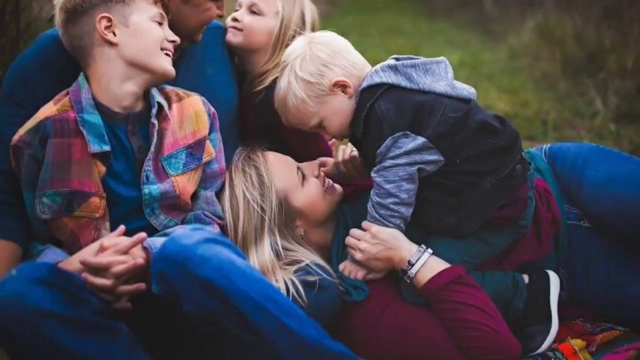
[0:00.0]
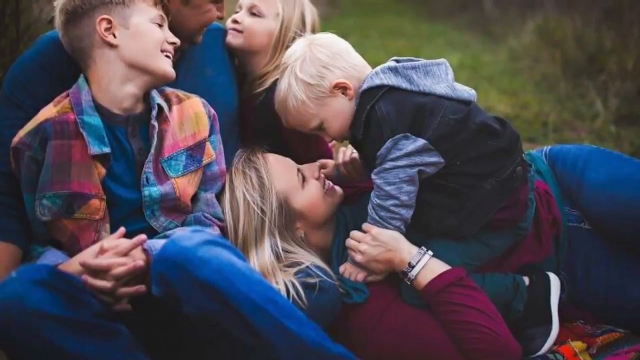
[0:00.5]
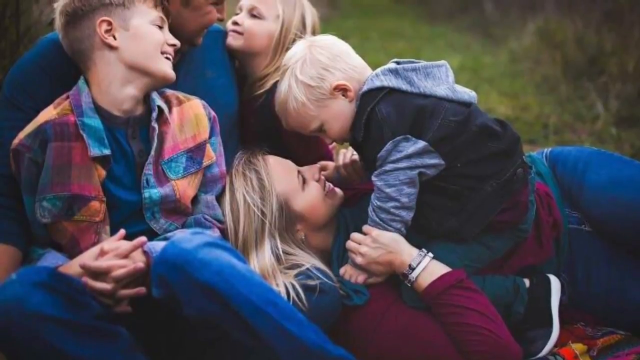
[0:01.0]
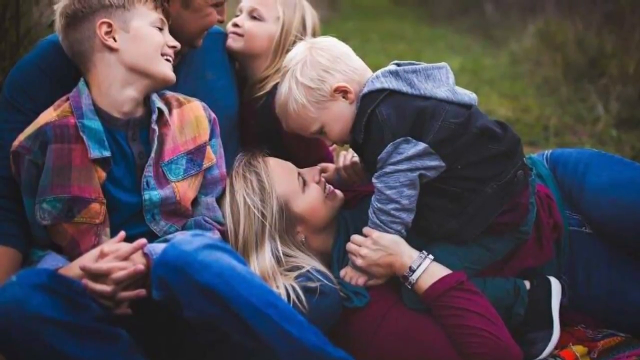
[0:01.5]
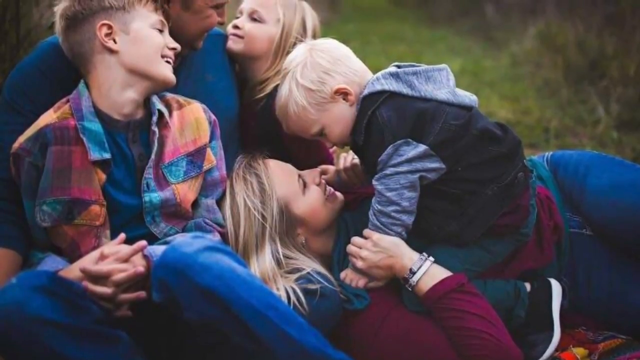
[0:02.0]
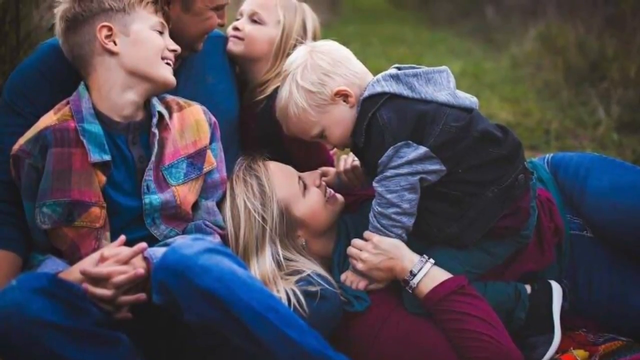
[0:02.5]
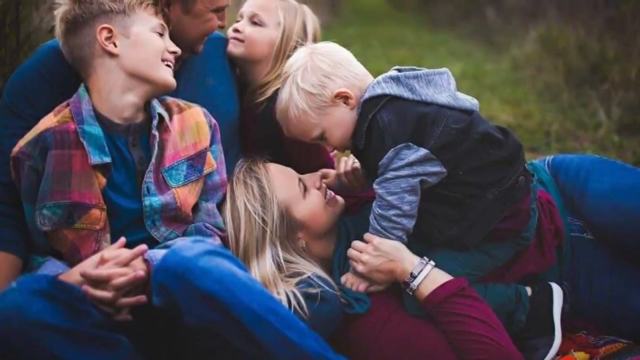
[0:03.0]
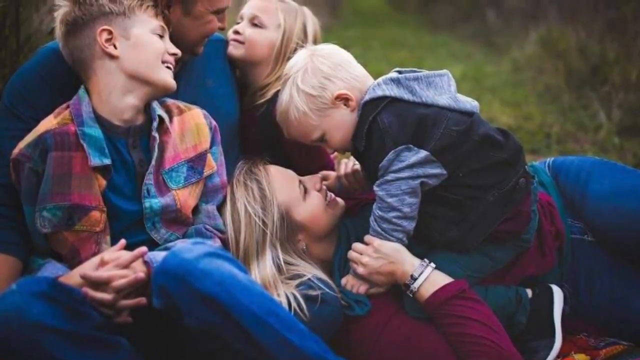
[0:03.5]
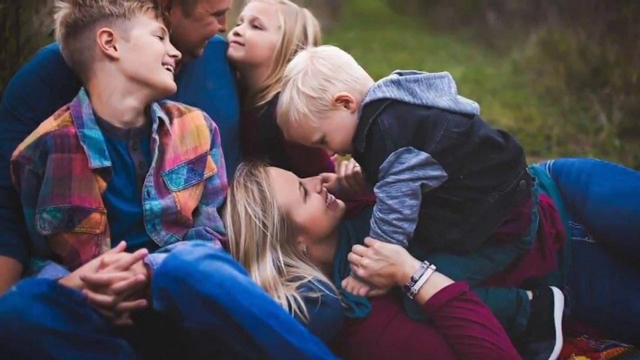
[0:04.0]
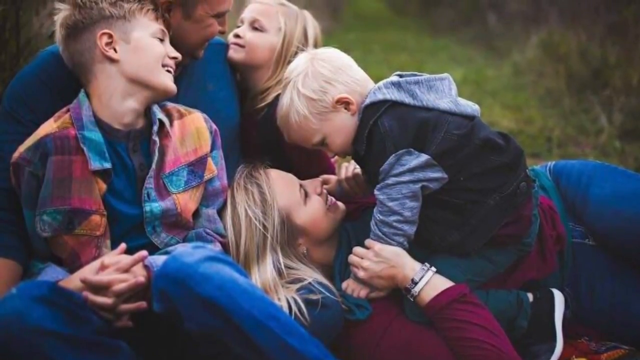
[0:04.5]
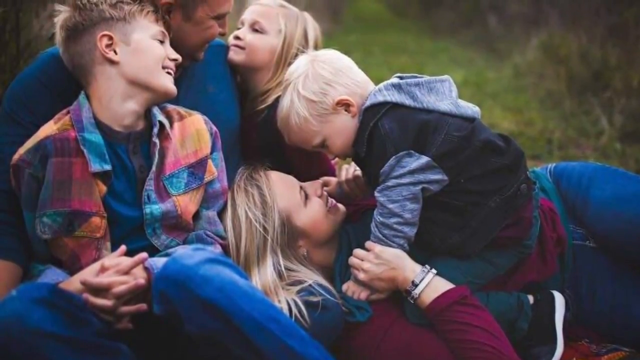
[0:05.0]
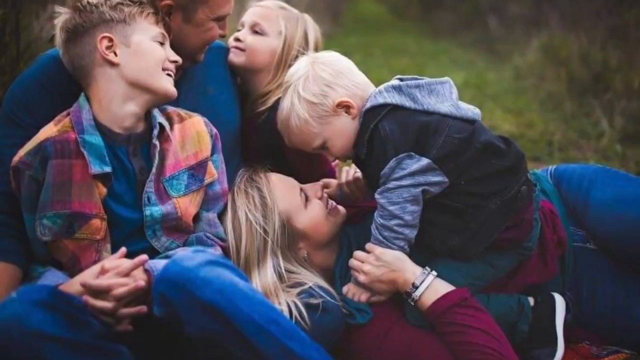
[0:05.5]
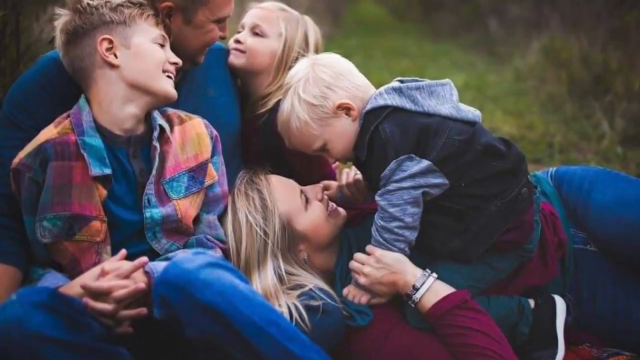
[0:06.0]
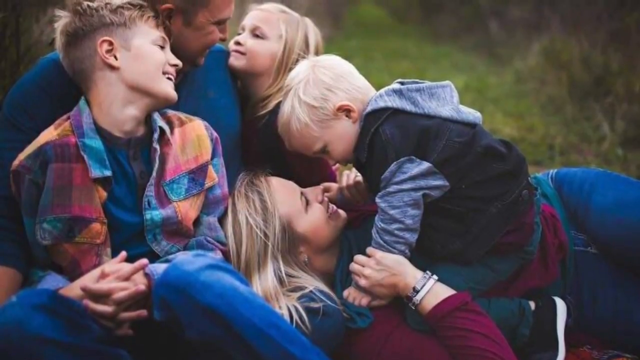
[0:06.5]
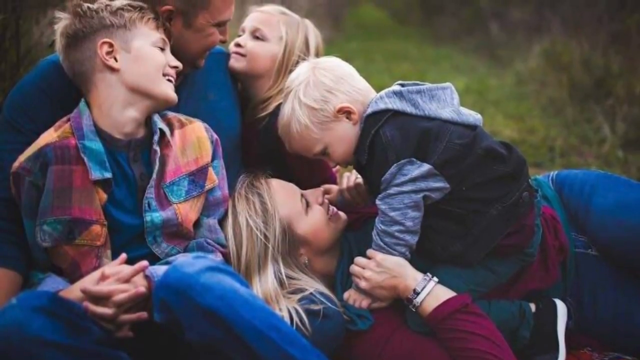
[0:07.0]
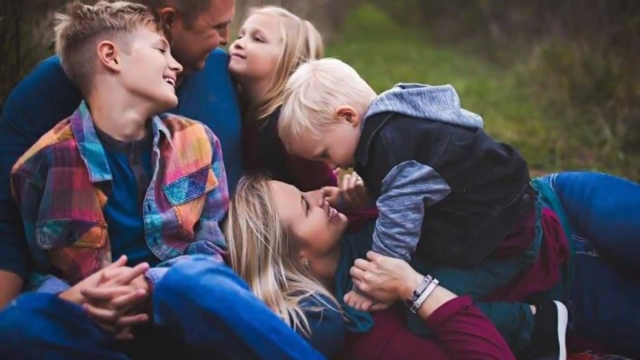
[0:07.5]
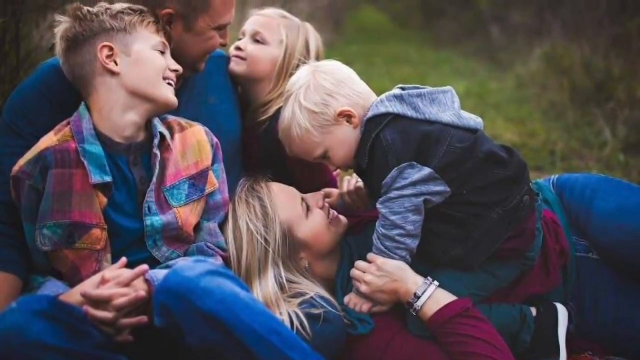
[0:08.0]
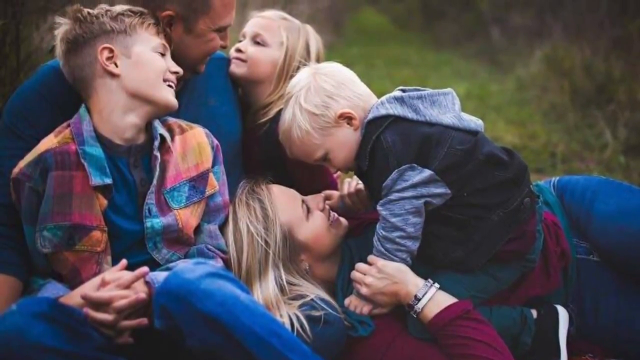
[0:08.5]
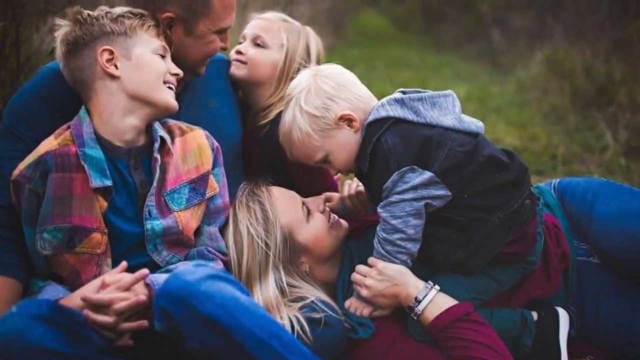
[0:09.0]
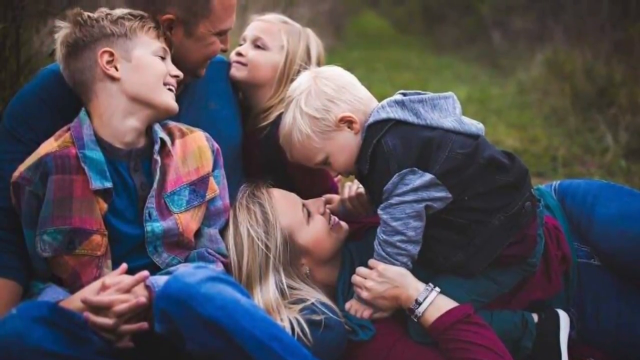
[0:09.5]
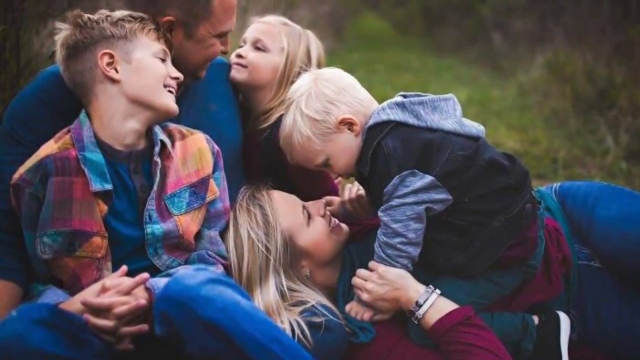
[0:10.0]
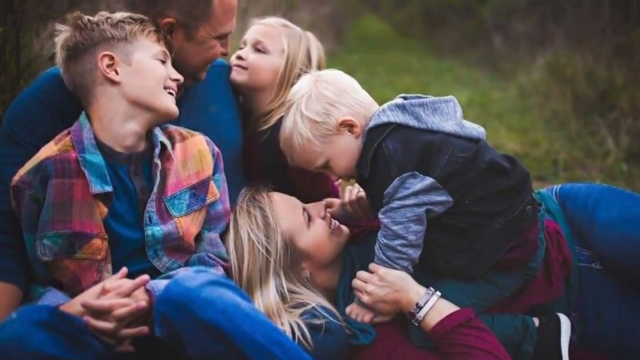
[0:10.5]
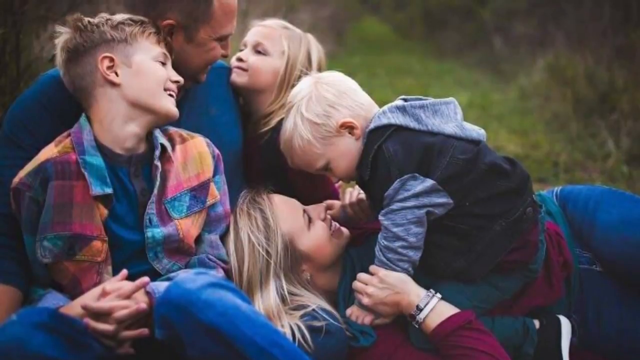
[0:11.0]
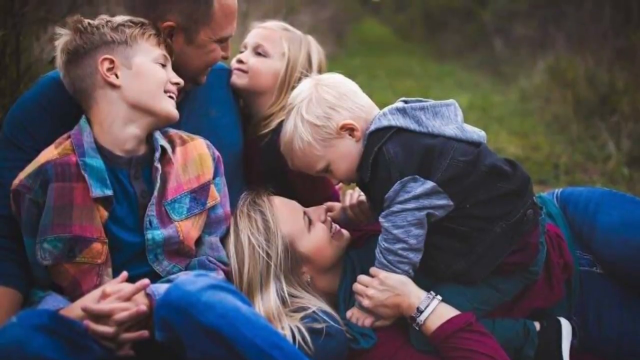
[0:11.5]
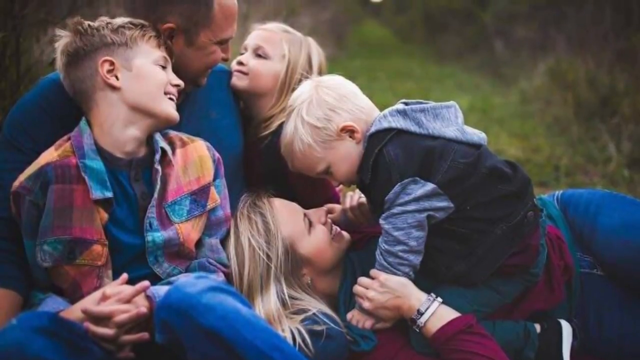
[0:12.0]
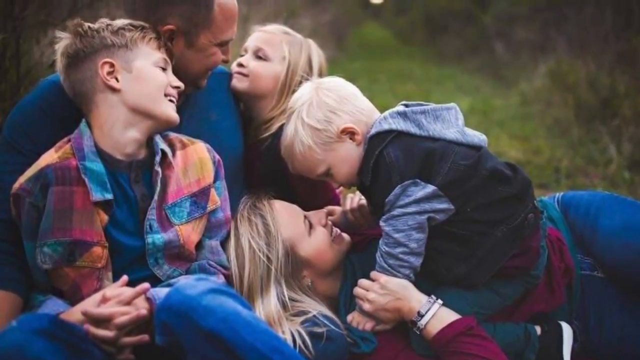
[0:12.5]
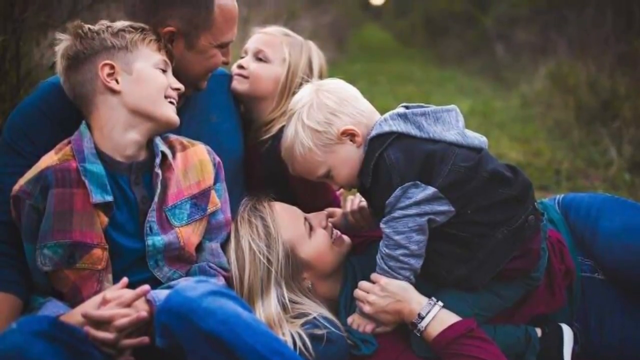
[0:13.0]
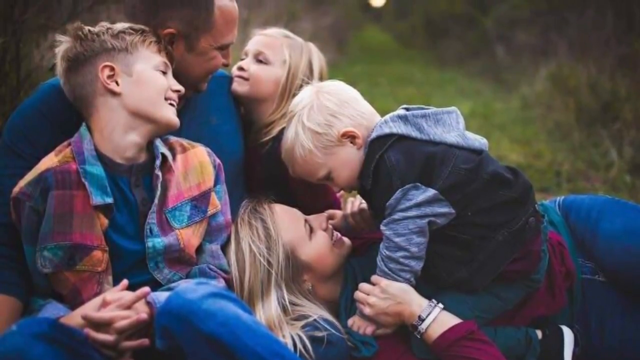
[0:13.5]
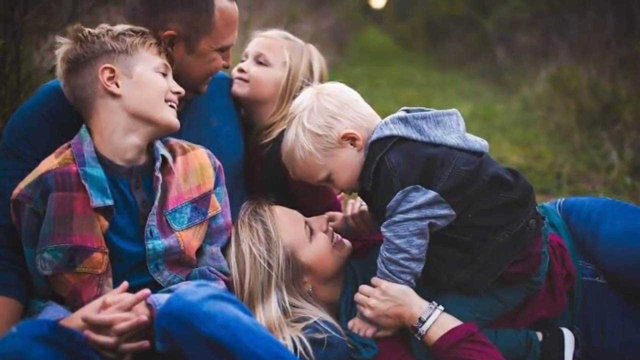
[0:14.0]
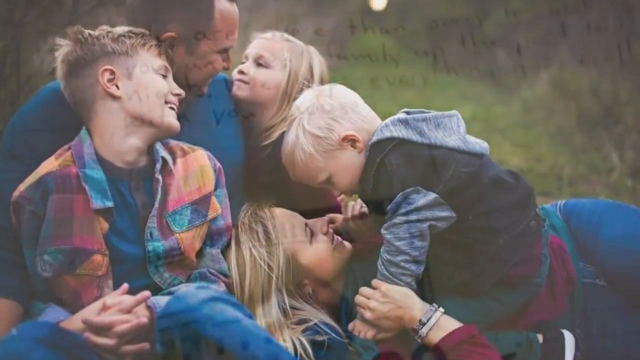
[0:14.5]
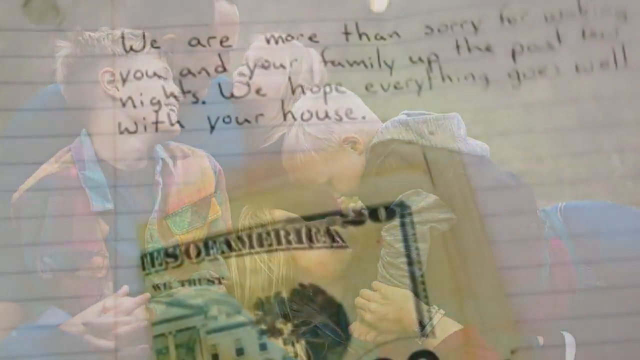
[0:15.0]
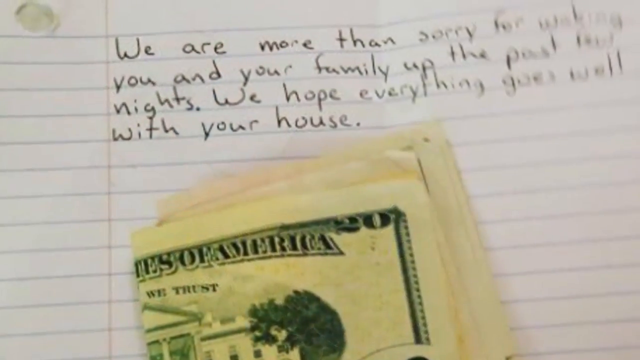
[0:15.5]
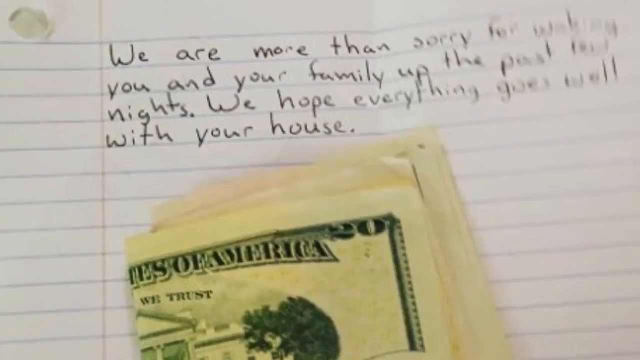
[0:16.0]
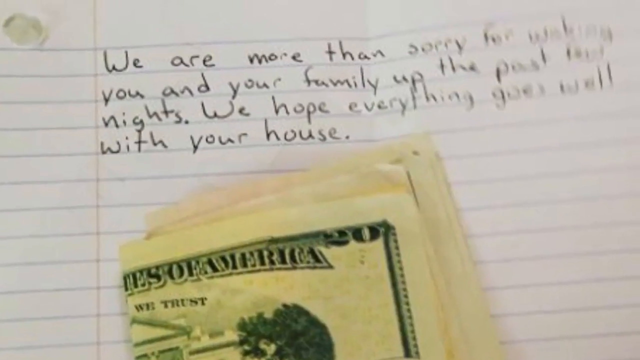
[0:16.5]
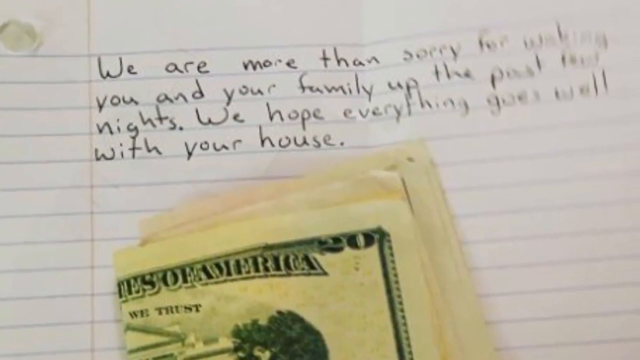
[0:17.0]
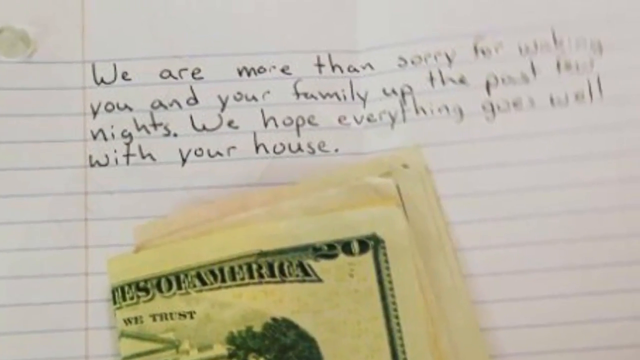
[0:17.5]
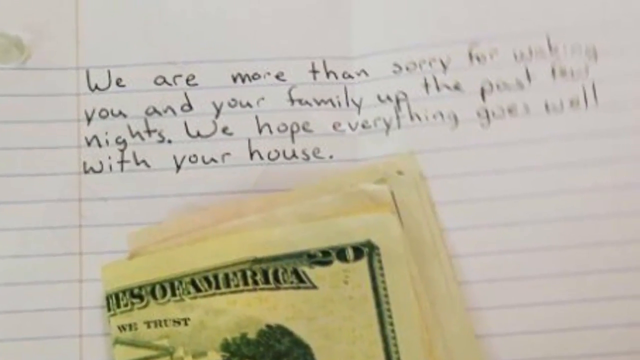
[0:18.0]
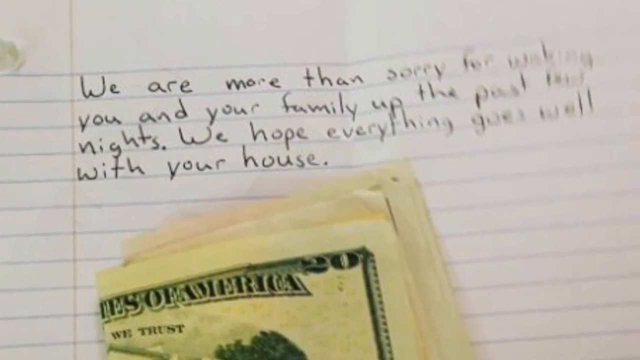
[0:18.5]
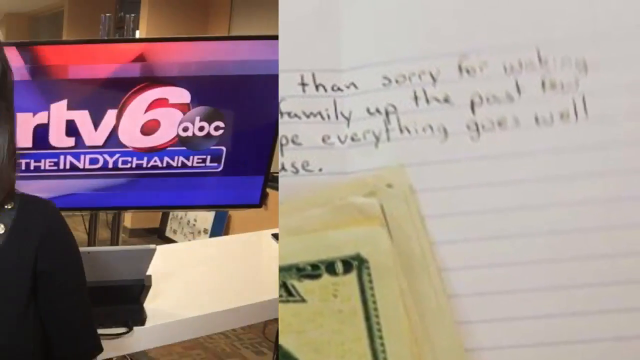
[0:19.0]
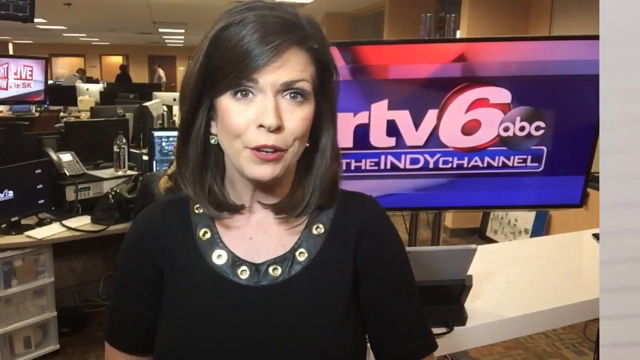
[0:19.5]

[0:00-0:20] A picture of a family appears: it looks like the mother is on the ground, and there are three kids, an older boy, a younger blonde boy and a younger girl, along with the dad, who is wearing blue. It looks like a happy family. Another picture, in the grass, looks like a professionally done photo. Next comes a handwritten note that says "I'm sorry for waking you and your family up the past few nights. We hope everything goes well with your house," with a little stack of money on it. The video then goes to "WRTV6 ABC, the Indy Channel," becoming some kind of newscast.